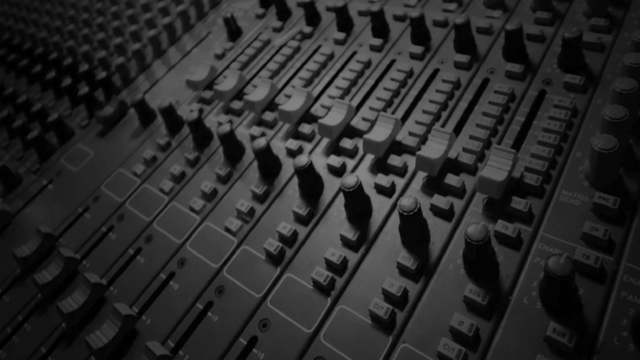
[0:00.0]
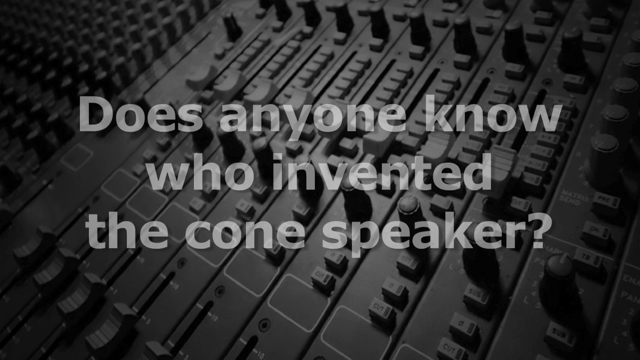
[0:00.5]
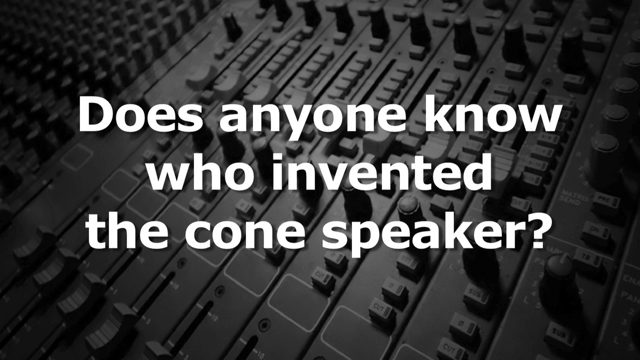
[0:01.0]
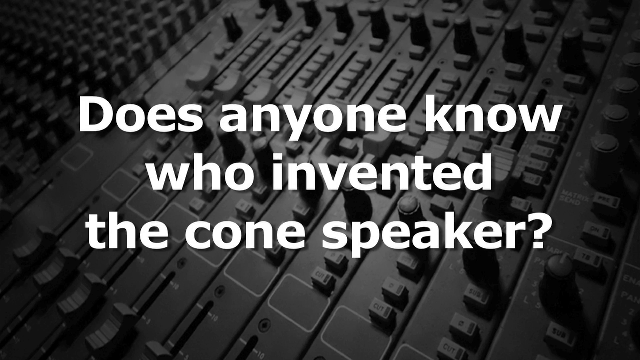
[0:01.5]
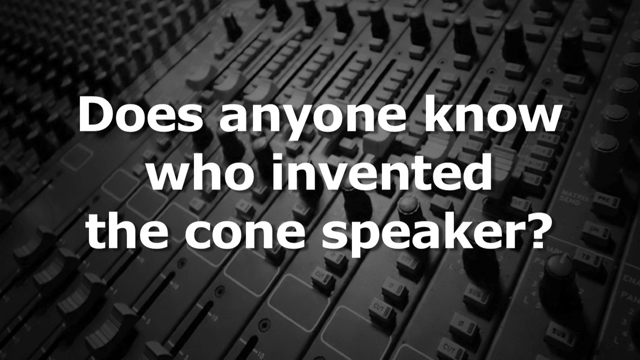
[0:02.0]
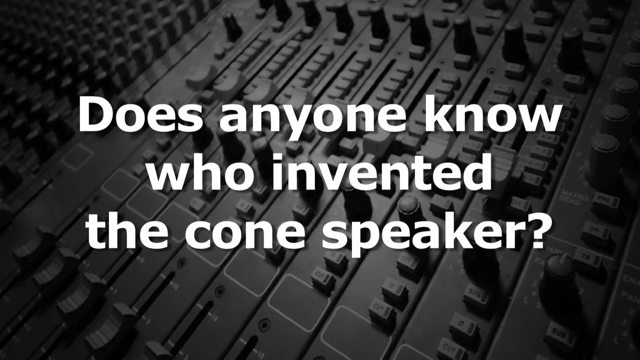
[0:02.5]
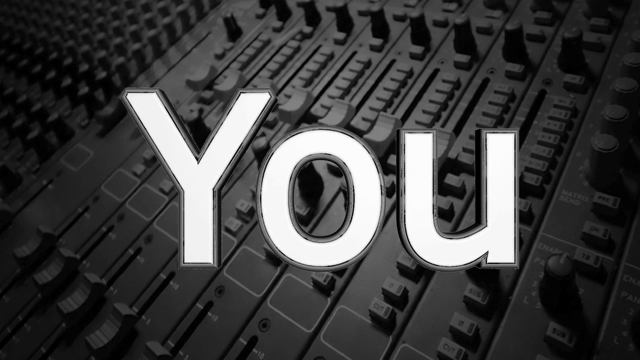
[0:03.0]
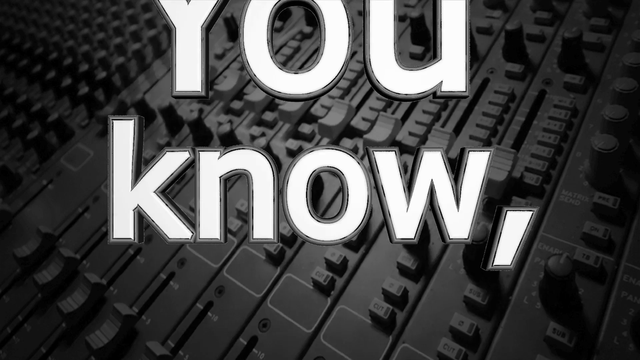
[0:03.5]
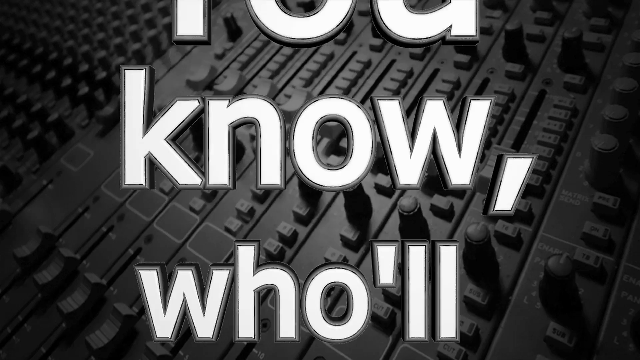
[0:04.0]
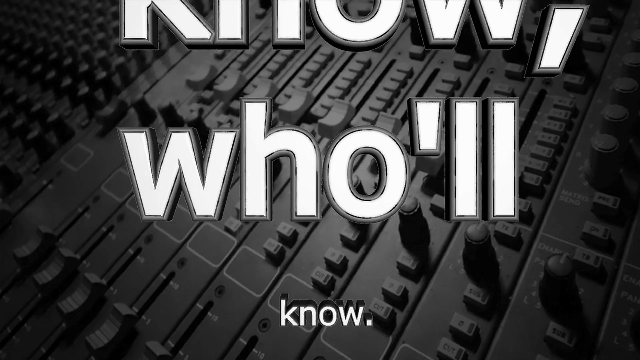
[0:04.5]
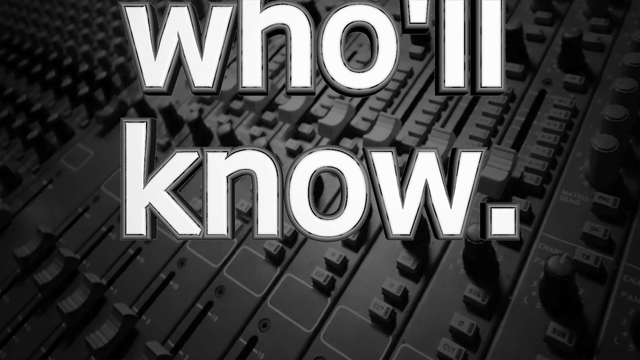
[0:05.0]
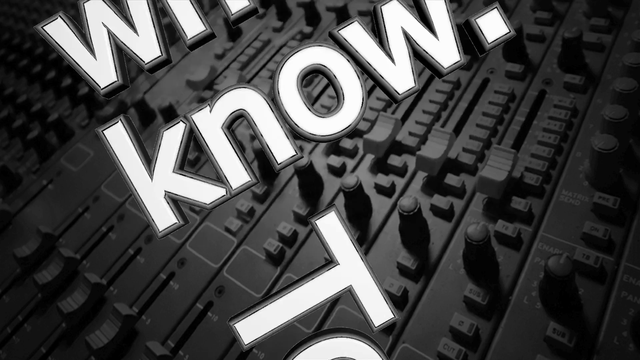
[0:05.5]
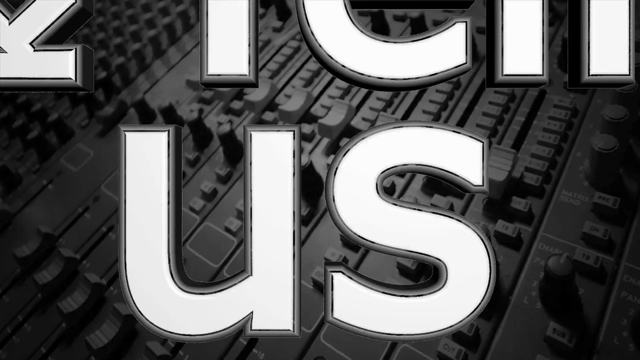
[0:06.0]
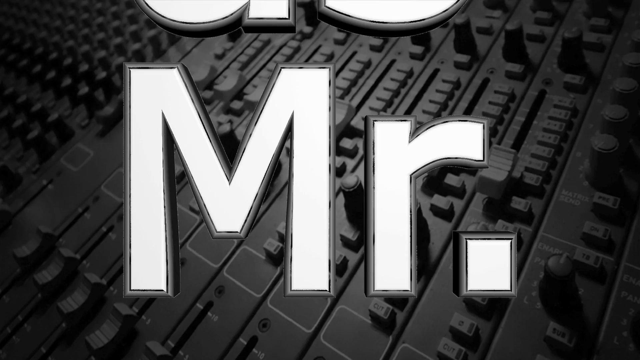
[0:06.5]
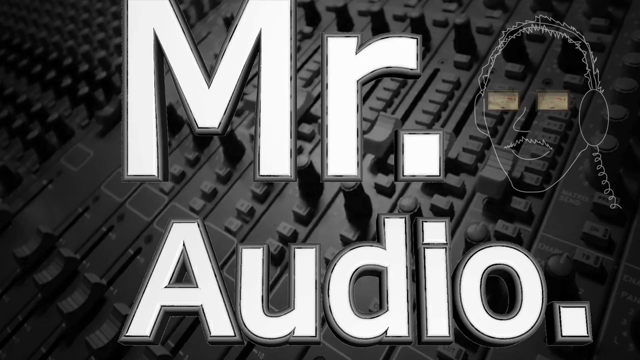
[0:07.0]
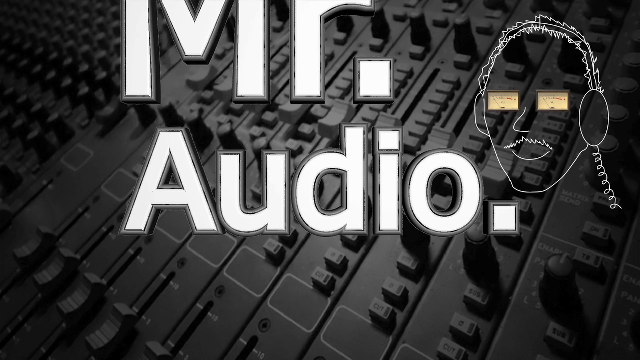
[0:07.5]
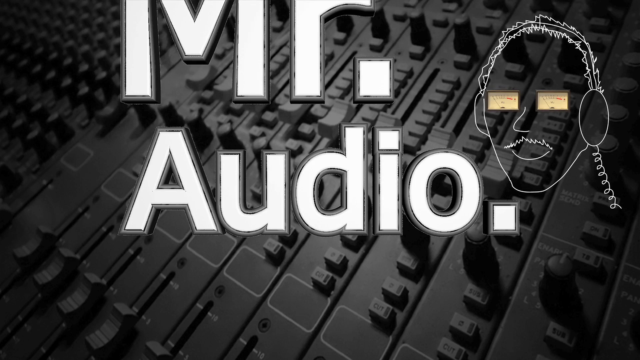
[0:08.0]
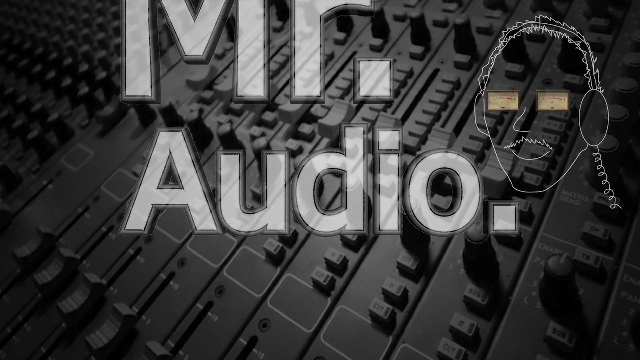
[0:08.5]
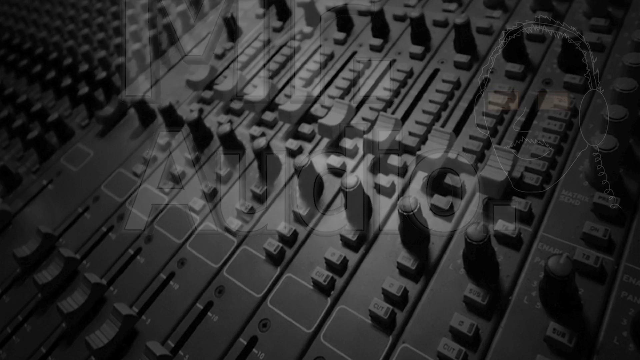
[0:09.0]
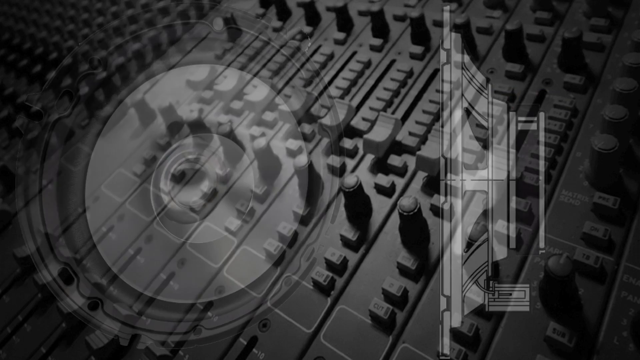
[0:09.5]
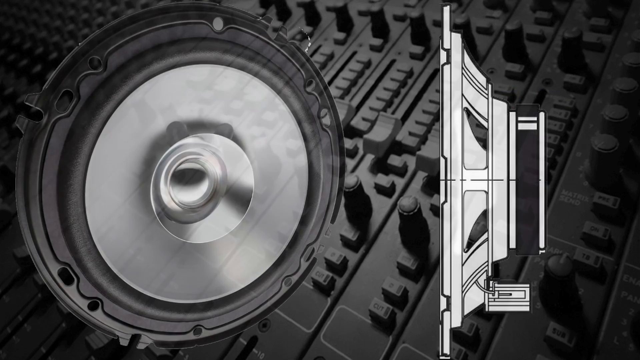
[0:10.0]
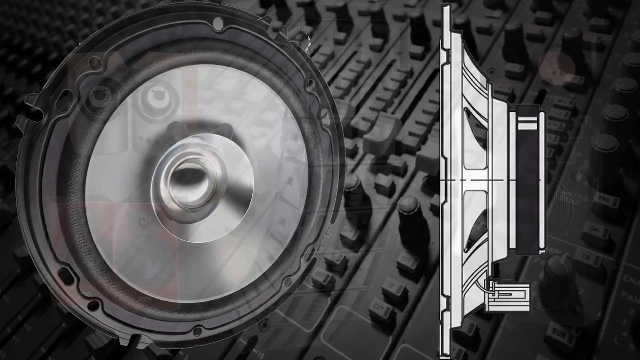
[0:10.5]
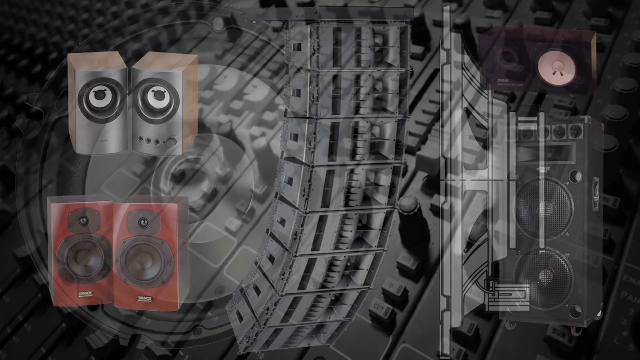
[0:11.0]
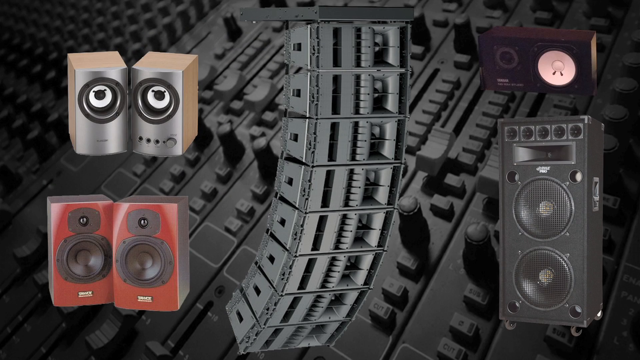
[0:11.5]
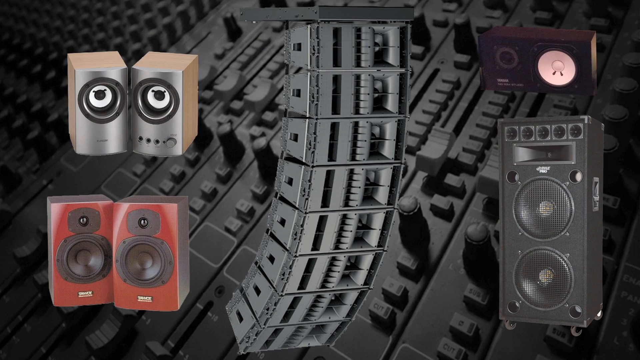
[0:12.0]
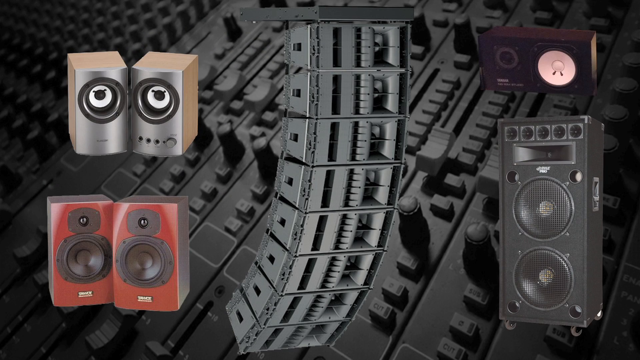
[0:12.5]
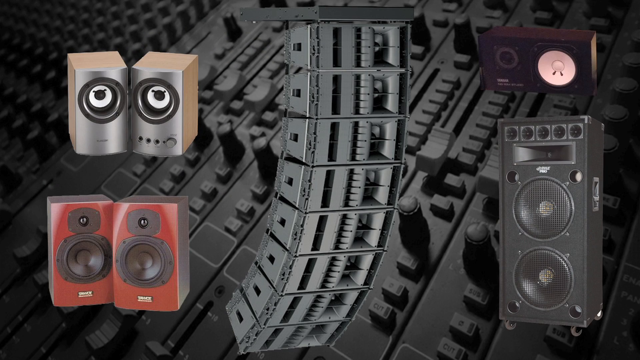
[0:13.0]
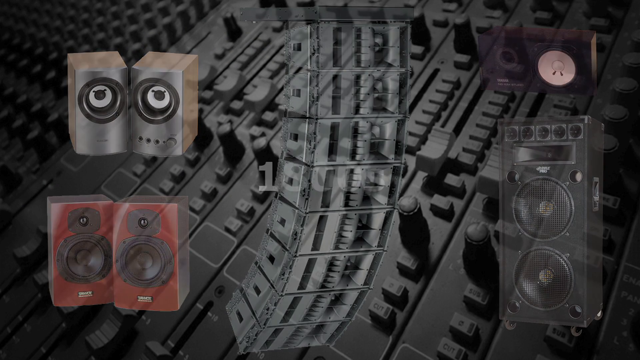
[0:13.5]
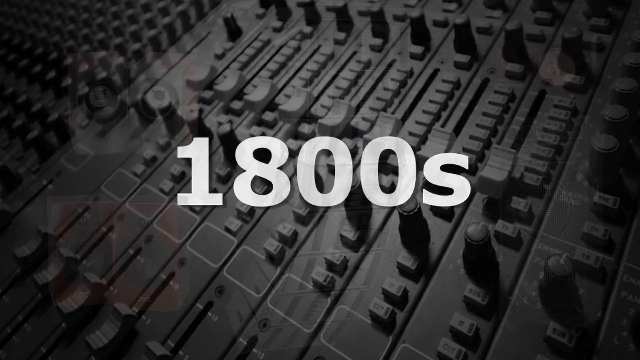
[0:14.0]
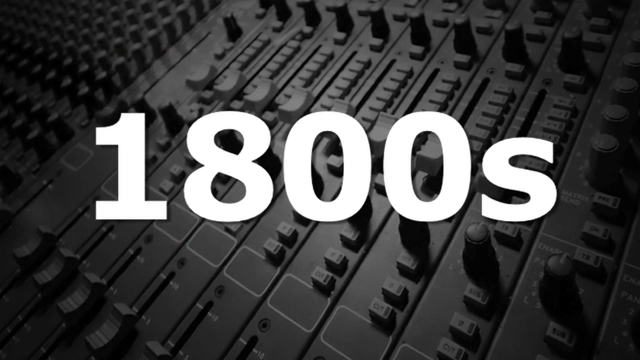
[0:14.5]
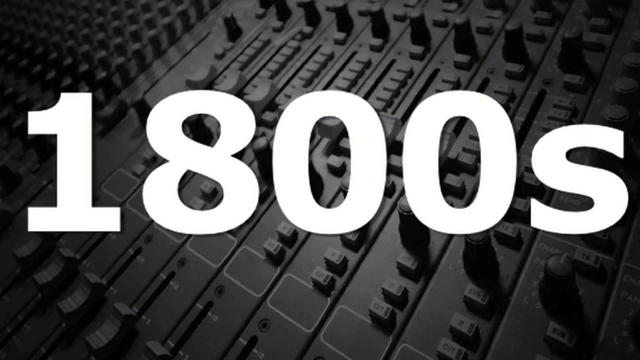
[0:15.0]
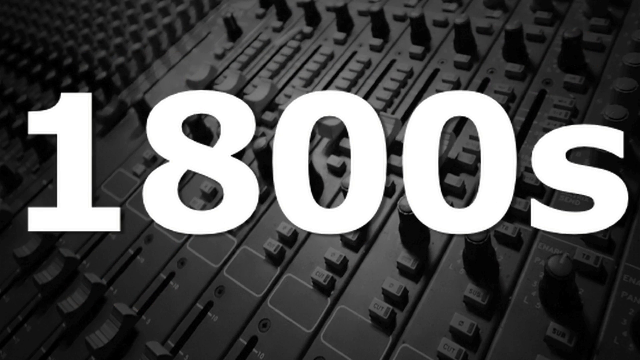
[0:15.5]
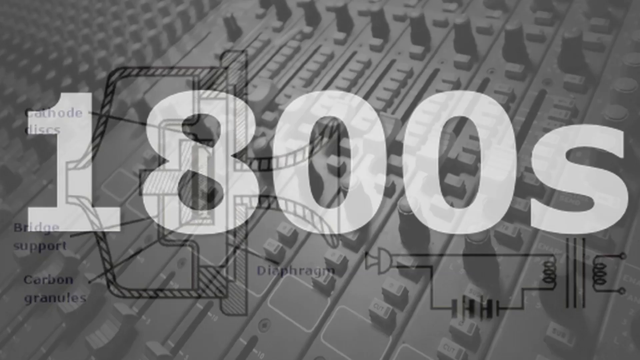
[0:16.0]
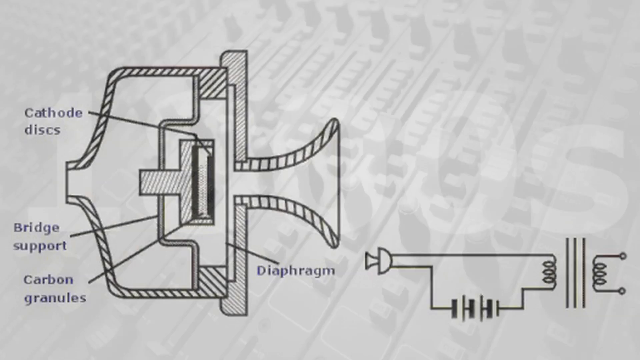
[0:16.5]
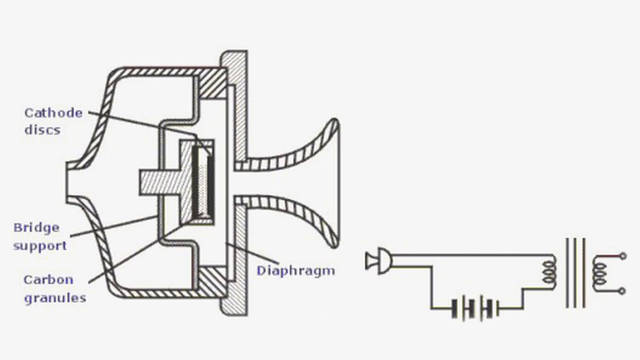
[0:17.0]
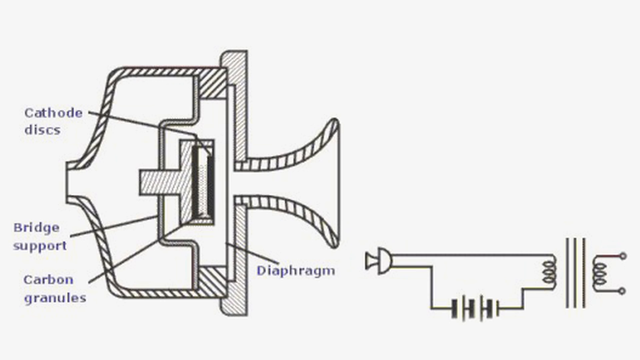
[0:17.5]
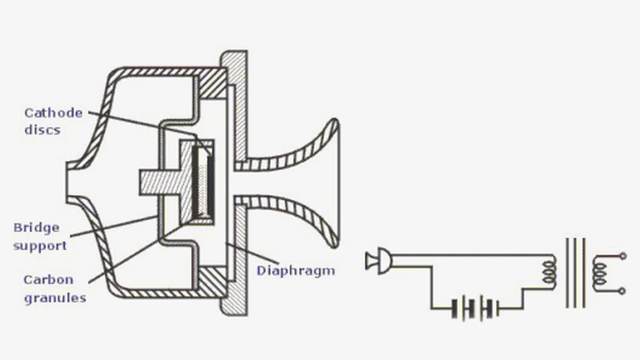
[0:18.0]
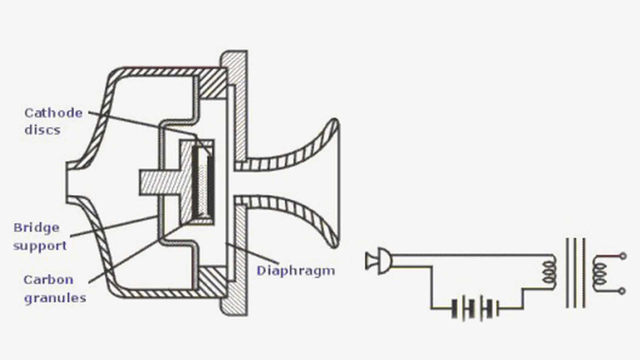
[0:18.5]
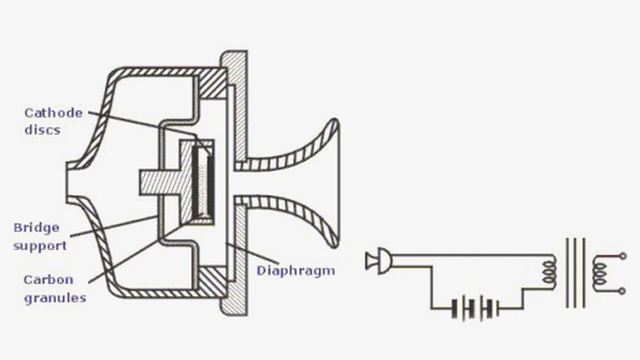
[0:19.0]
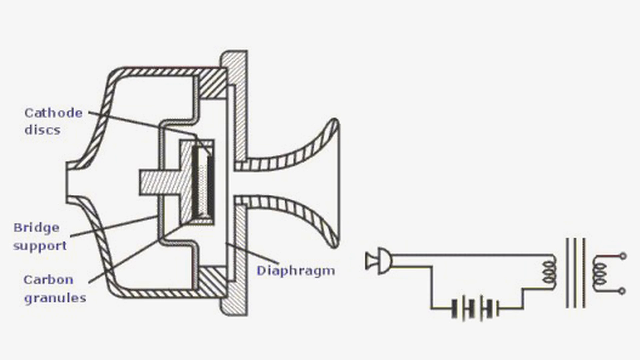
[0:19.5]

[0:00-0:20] An audio mixer is in the background as the text "Does anyone know who invented the cone speaker?" appears; the video apparently concerns who invented cone speakers. Big letters bounce in one word at a time: "You know who'll know?" followed by "Mr. Audio," with a picture of a man wearing headphones on the right. The picture and text fade away. A video of a speaker appears on the left, and on the right a horizontal side view of a speaker is displayed. The next screen shows five different speakers: two gray subwoofers in the top left, two big speakers in the bottom right, theater overhead speakers in the center, and to the right overhead speakers and a very large vertical black speaker. The text "1800s" zooms into the screen. A rough diagram appears showing how a speaker works, with cathode discs, bridge support, carbon granules, and a diaphragm. The text "John Phillips Reis" appears below, with an image of him above.